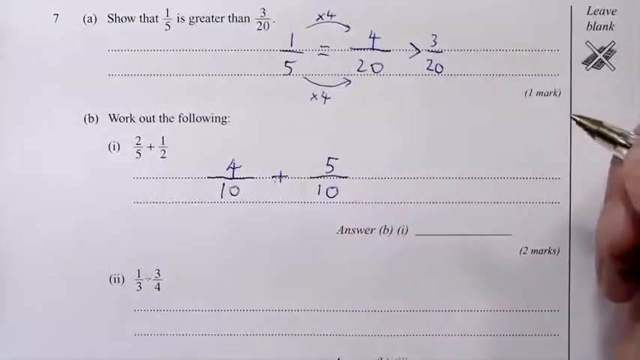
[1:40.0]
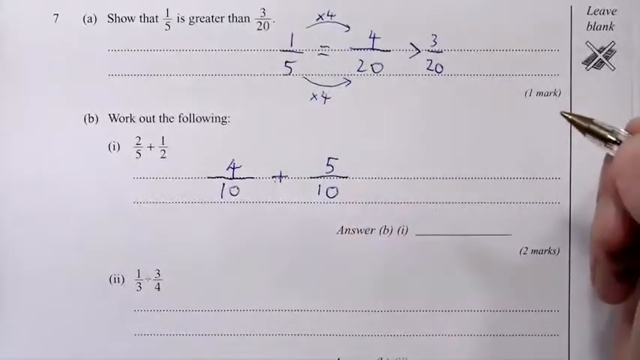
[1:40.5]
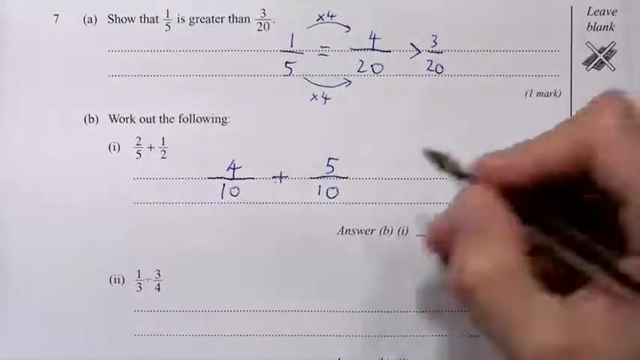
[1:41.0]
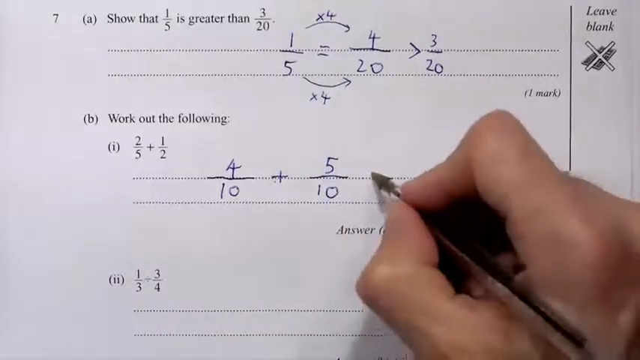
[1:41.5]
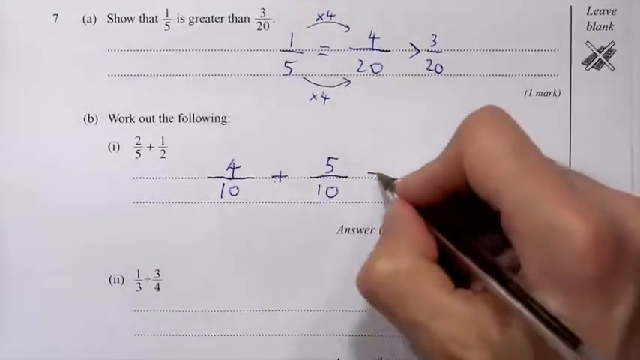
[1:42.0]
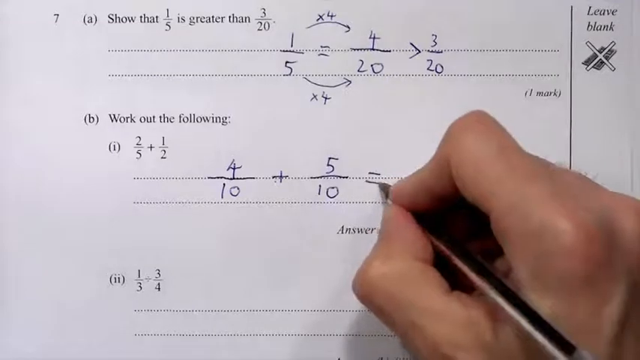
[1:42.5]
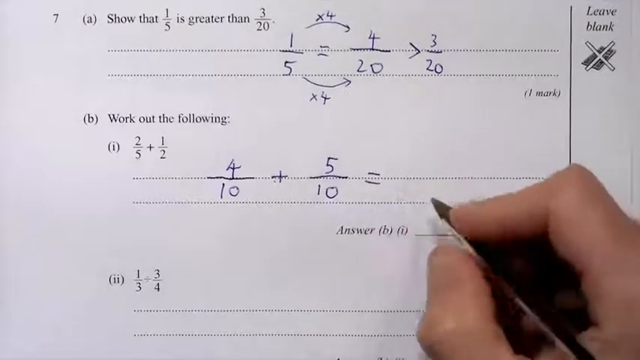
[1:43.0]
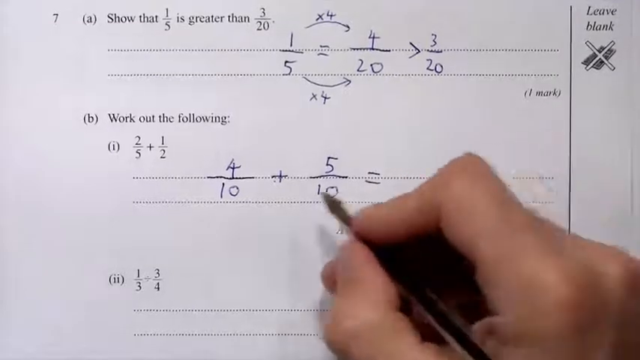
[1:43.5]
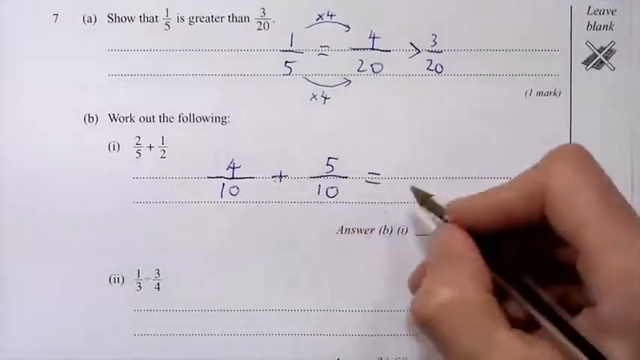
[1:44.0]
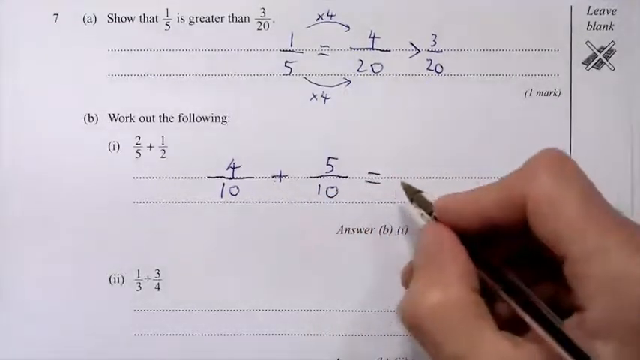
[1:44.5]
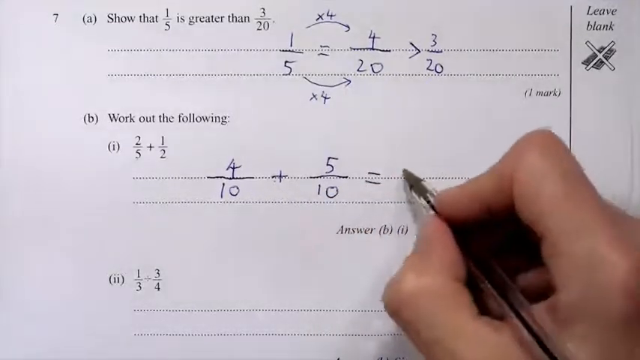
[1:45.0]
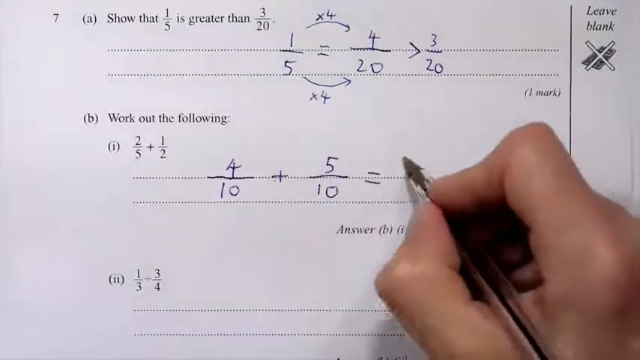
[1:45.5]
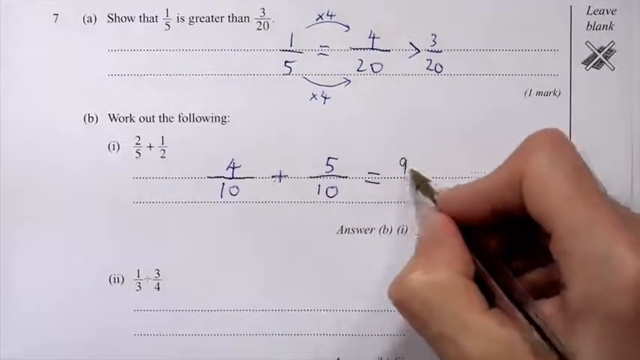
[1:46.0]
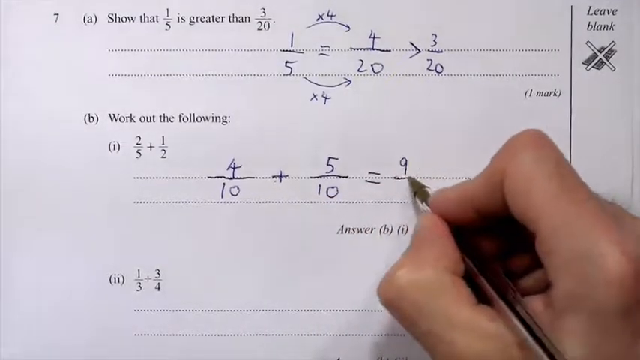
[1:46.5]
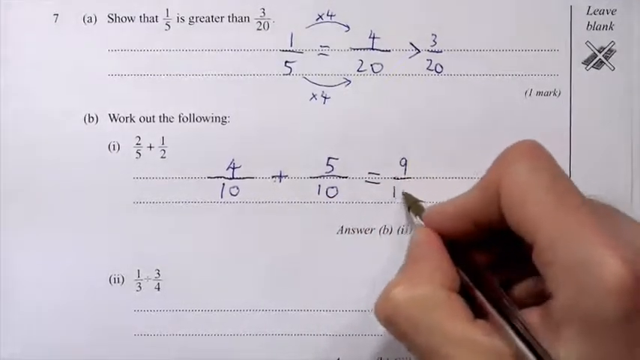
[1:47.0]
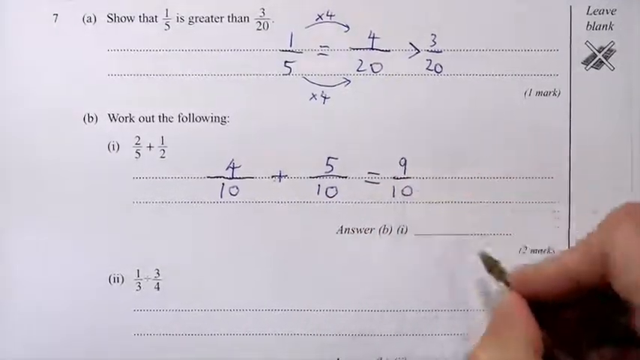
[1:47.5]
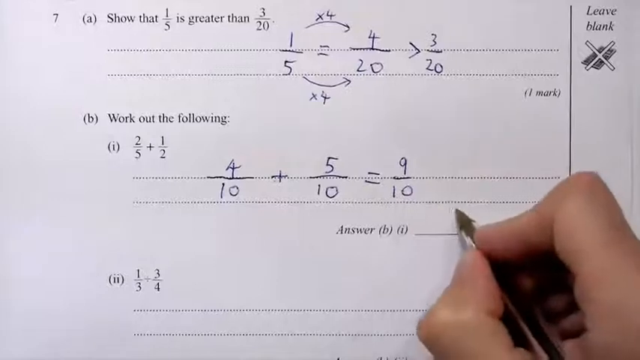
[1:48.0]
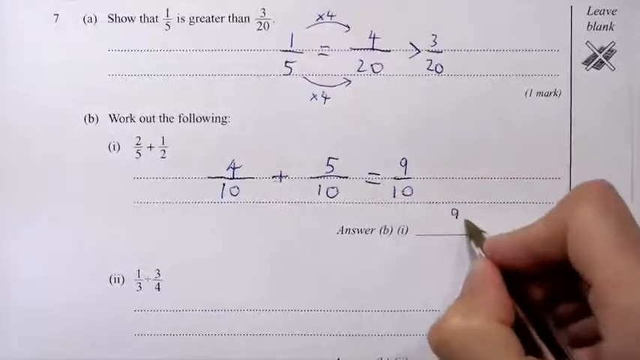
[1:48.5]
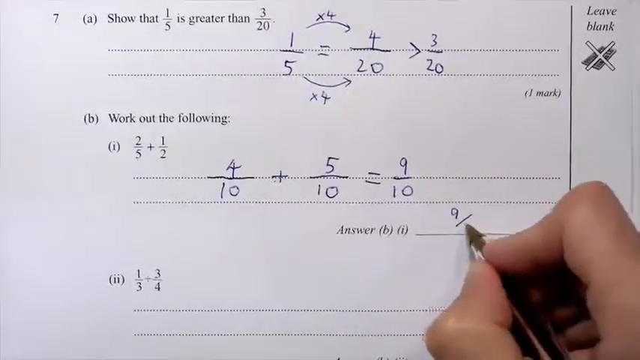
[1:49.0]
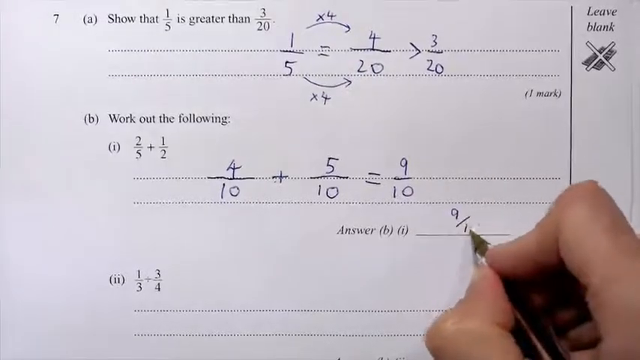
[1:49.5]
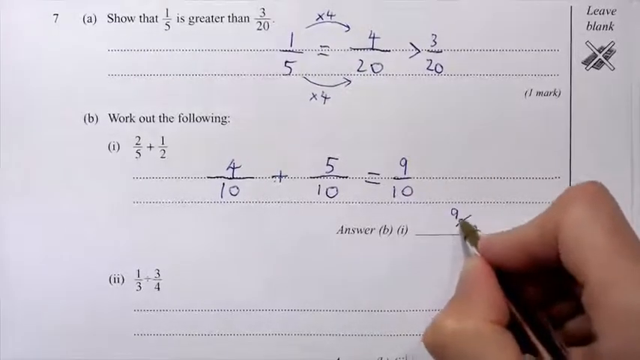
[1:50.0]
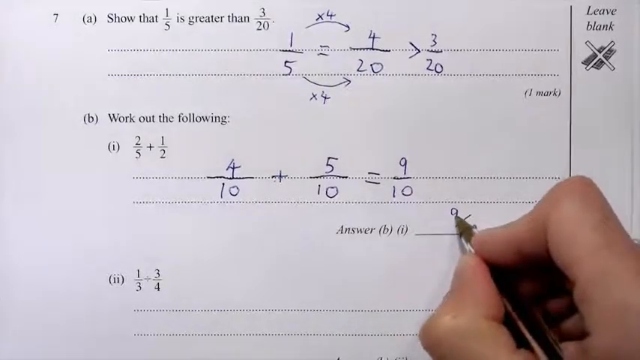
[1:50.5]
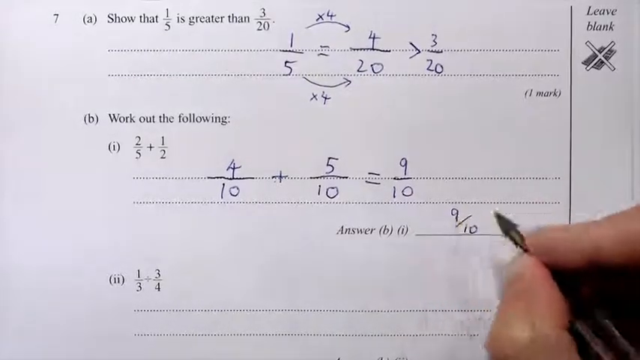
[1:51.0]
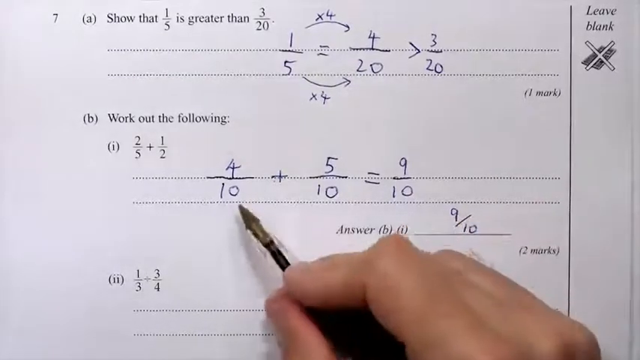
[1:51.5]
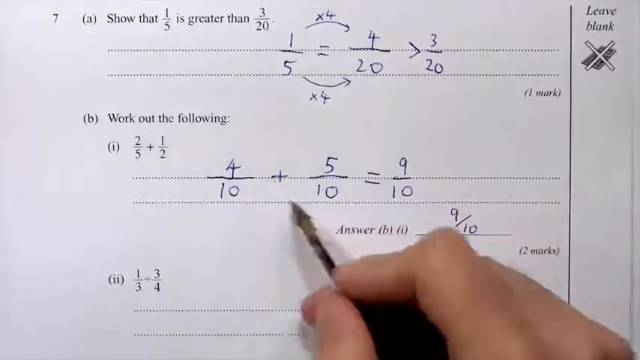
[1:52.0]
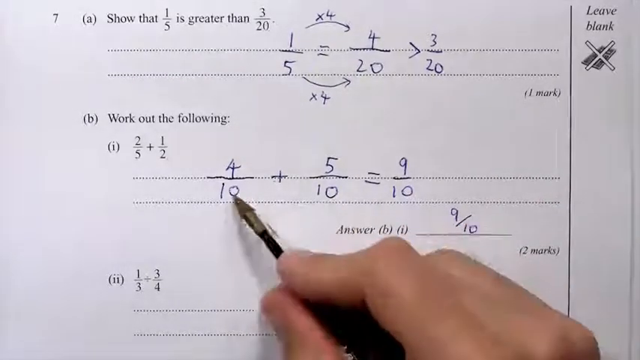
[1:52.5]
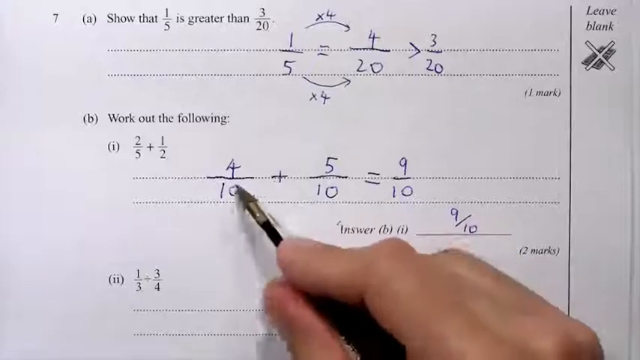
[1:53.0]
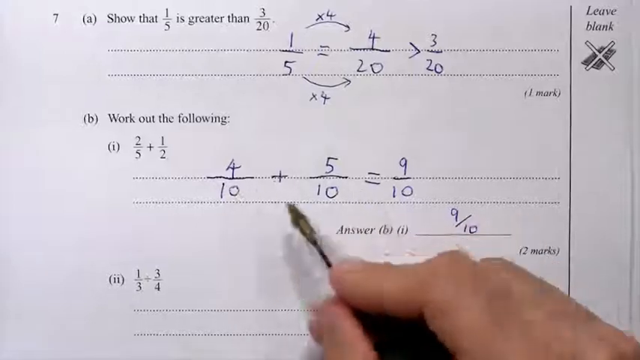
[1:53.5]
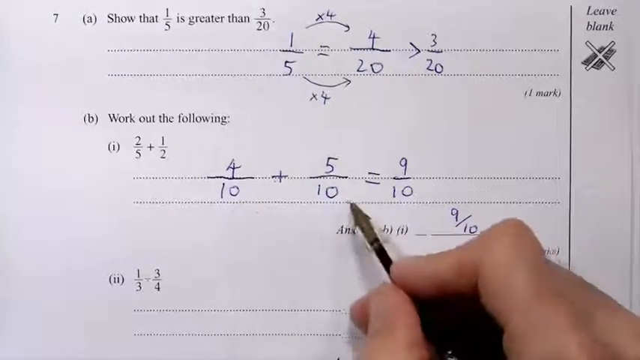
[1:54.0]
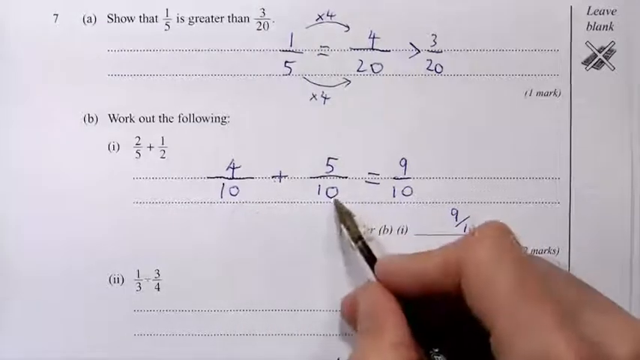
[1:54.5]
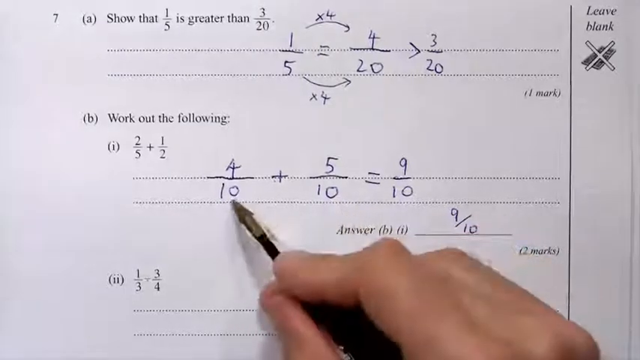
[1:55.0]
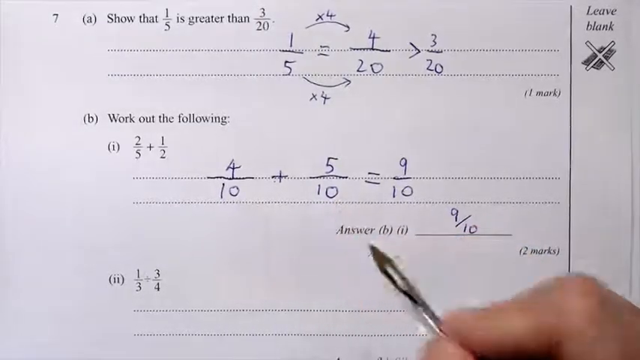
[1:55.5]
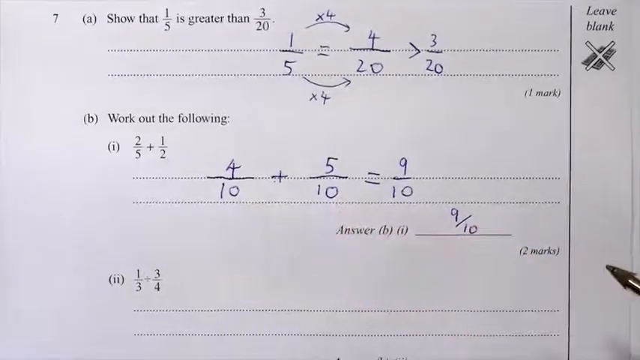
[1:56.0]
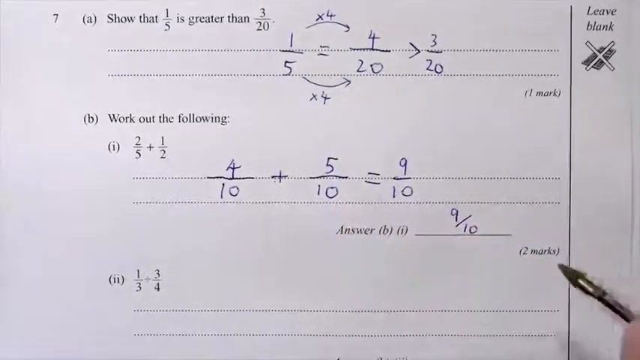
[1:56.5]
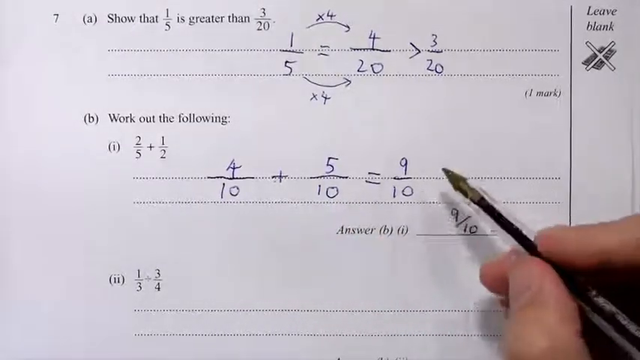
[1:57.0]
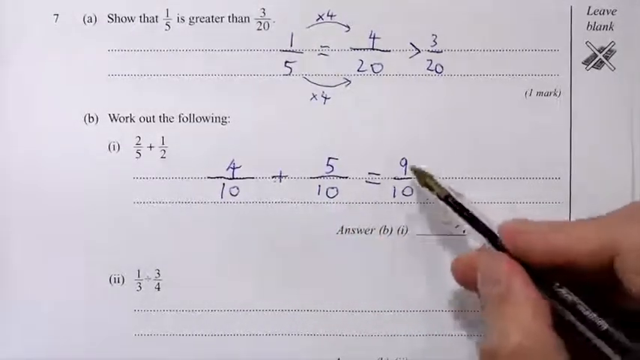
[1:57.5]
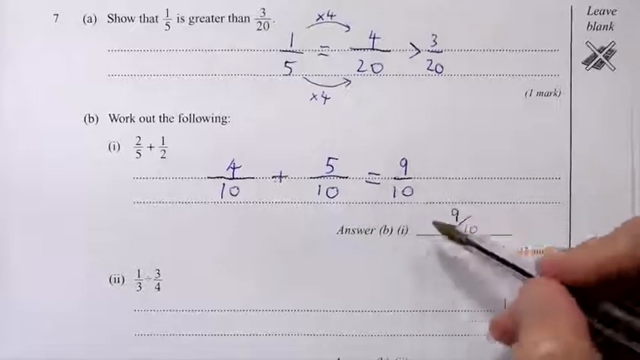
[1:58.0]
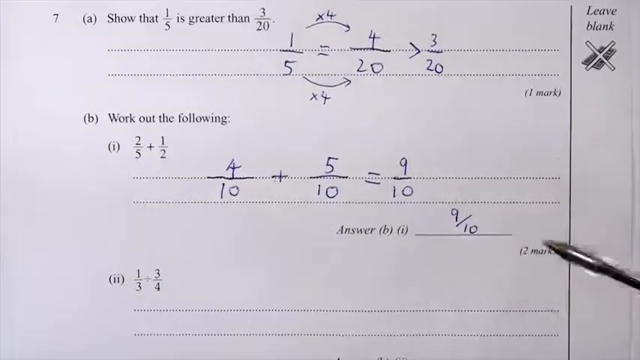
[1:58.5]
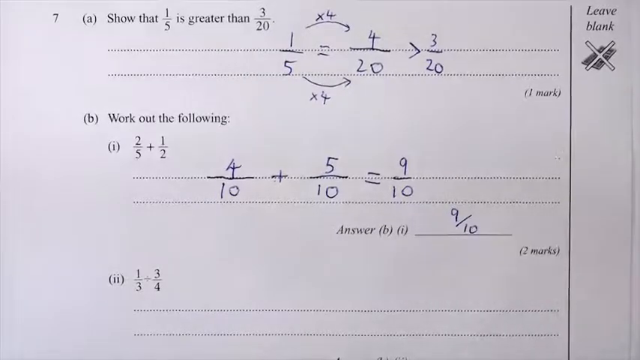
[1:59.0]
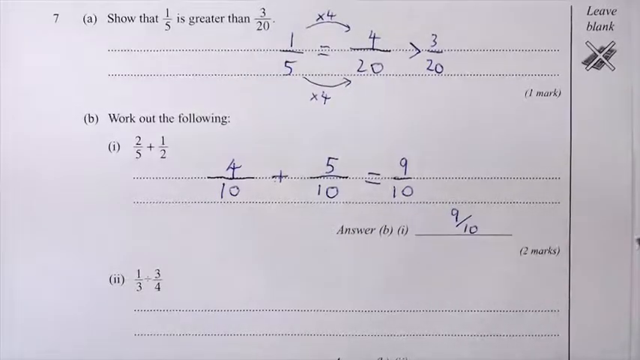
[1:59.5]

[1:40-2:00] The two fractions, 4/10 plus 5/10, are added across, giving the answer 9/10. The person doing the work on the sheet is writing with a pen.